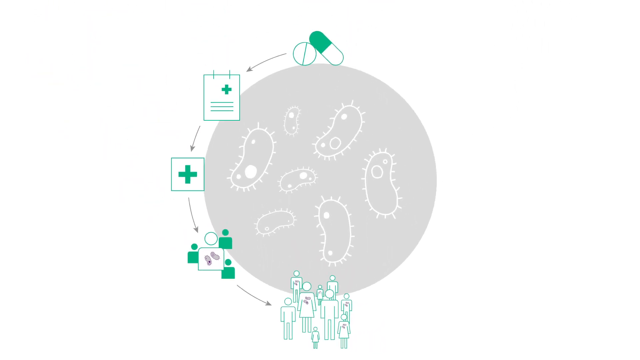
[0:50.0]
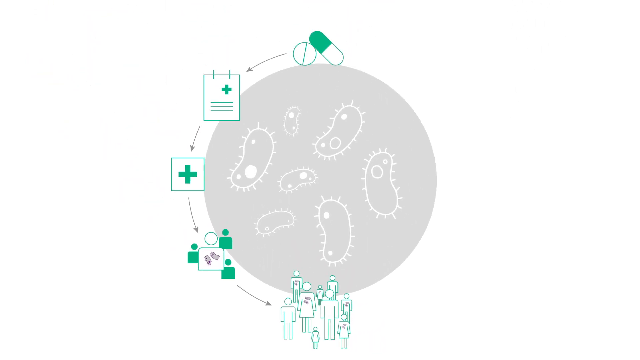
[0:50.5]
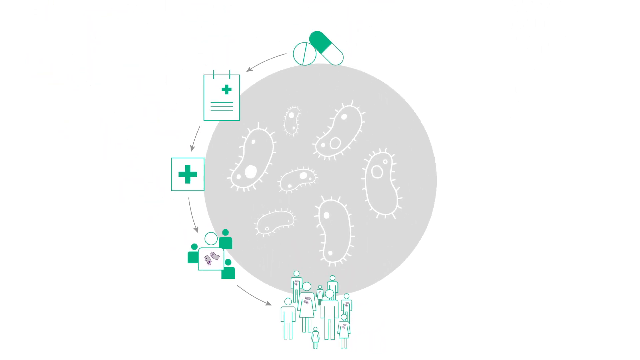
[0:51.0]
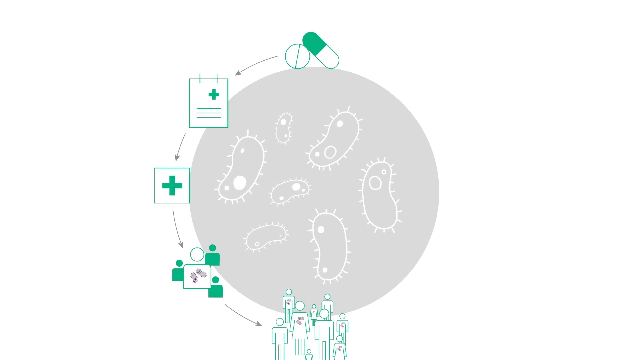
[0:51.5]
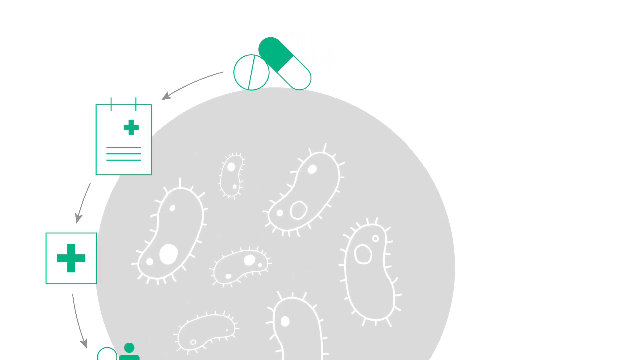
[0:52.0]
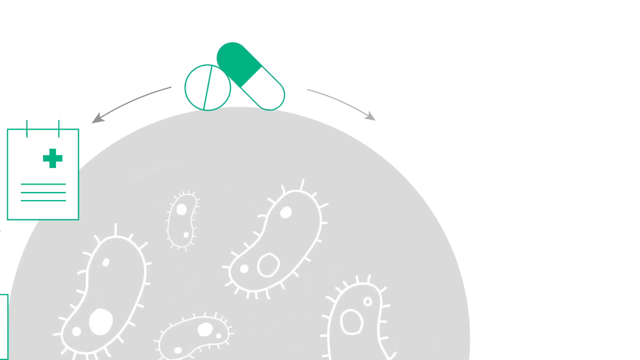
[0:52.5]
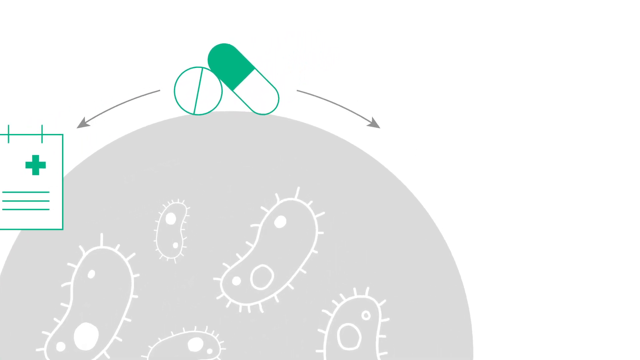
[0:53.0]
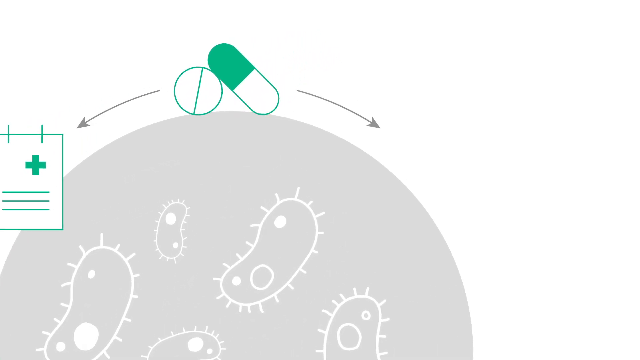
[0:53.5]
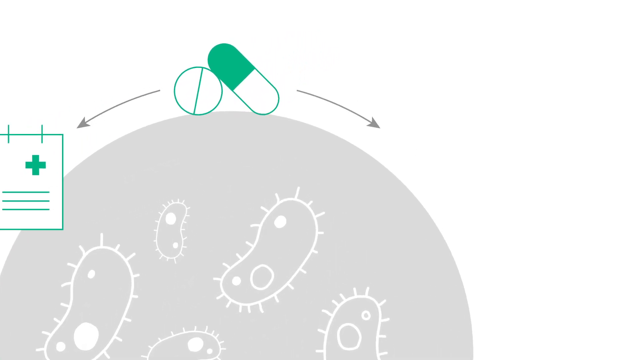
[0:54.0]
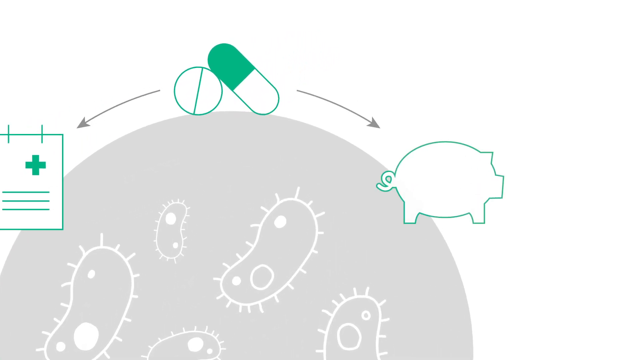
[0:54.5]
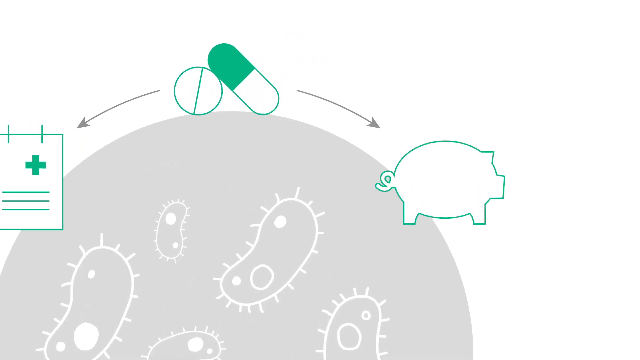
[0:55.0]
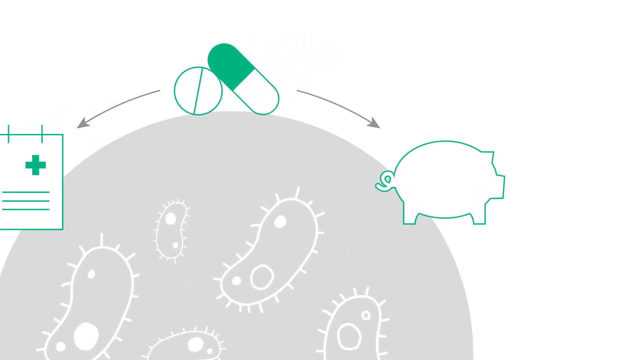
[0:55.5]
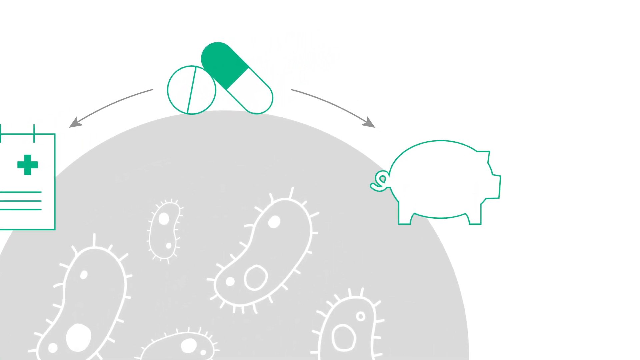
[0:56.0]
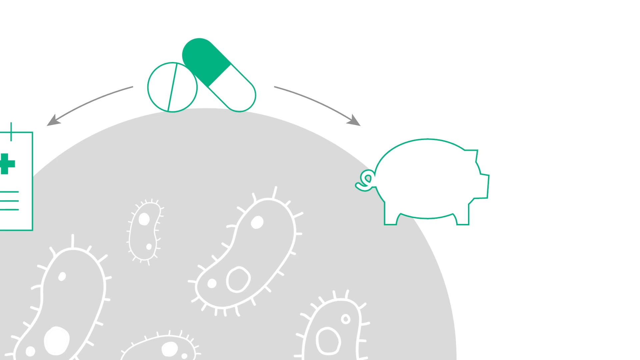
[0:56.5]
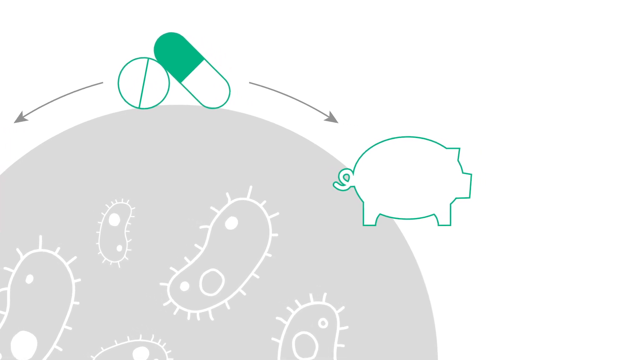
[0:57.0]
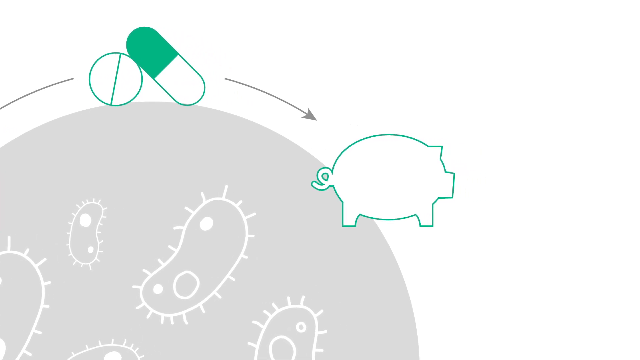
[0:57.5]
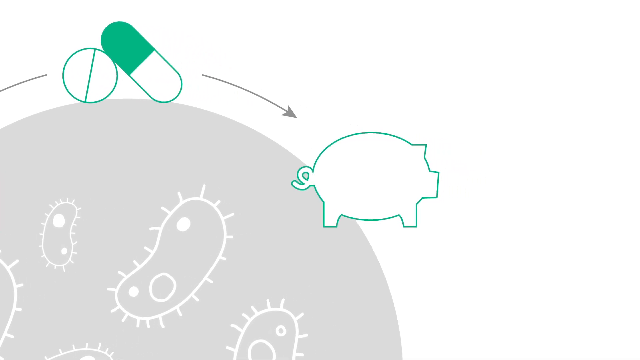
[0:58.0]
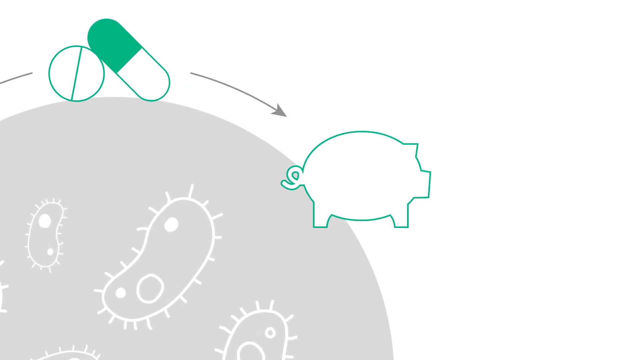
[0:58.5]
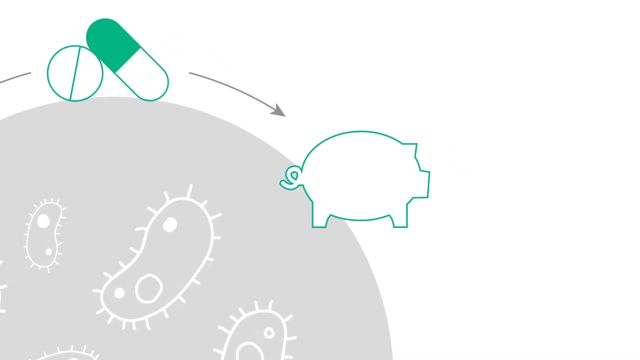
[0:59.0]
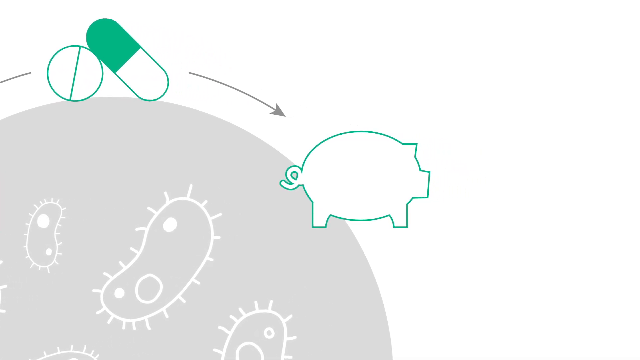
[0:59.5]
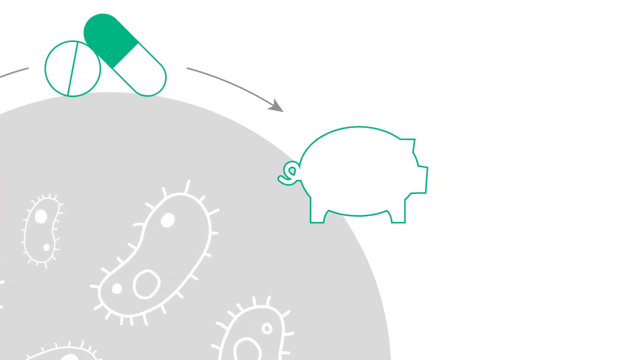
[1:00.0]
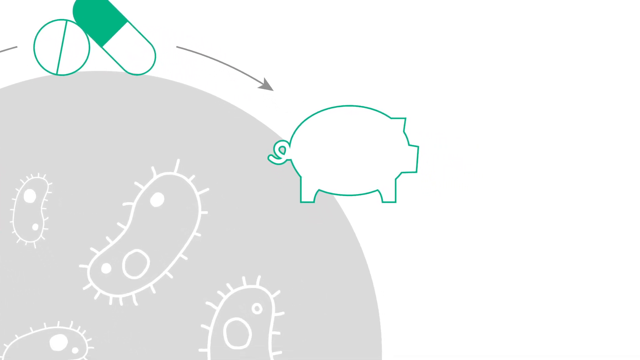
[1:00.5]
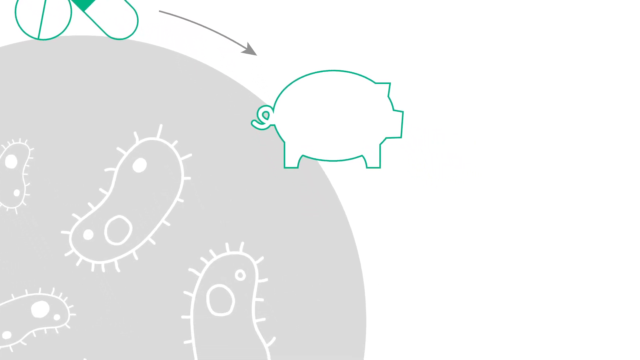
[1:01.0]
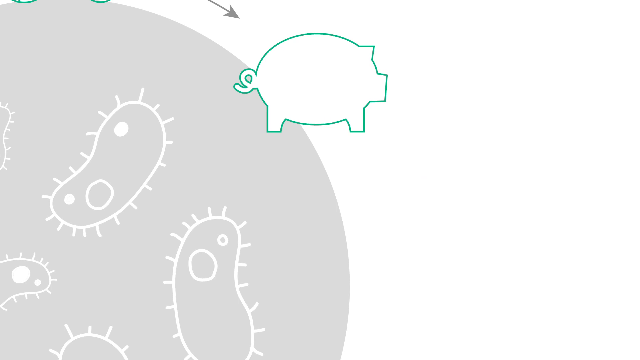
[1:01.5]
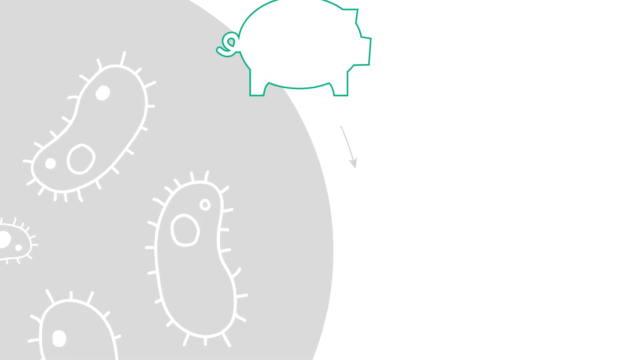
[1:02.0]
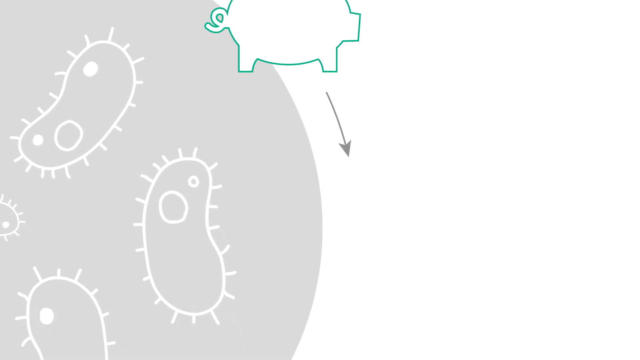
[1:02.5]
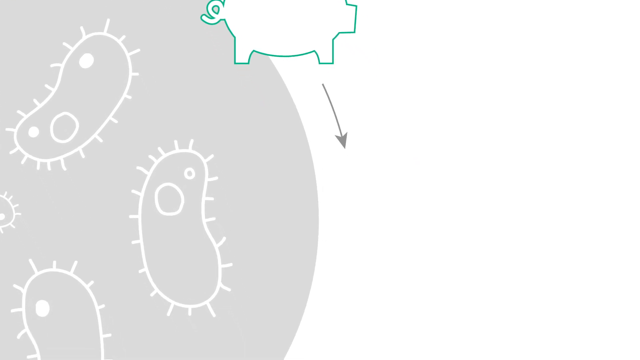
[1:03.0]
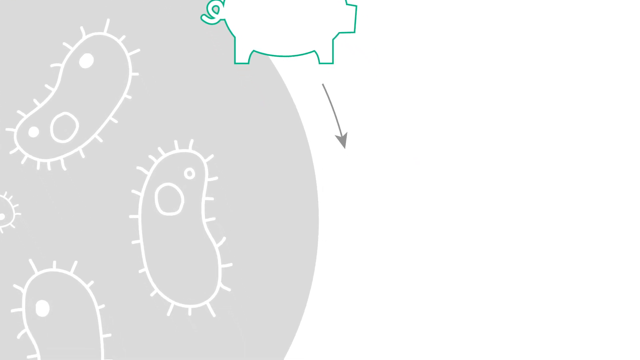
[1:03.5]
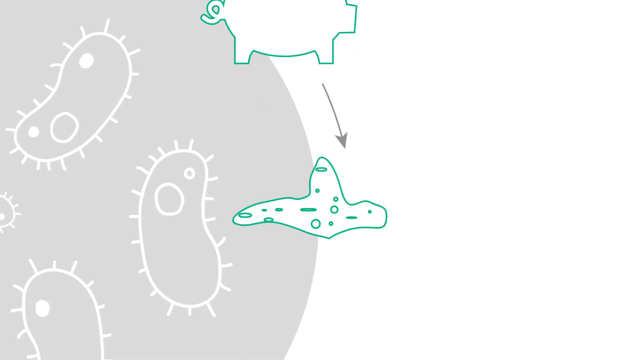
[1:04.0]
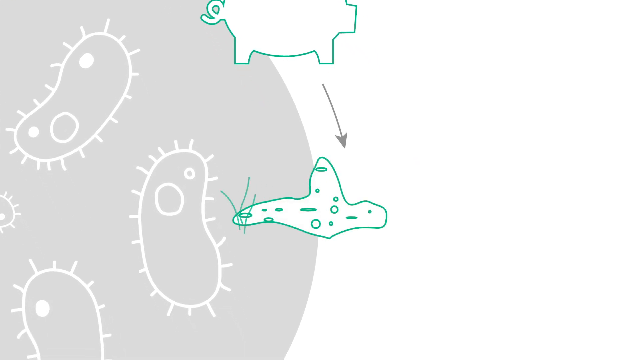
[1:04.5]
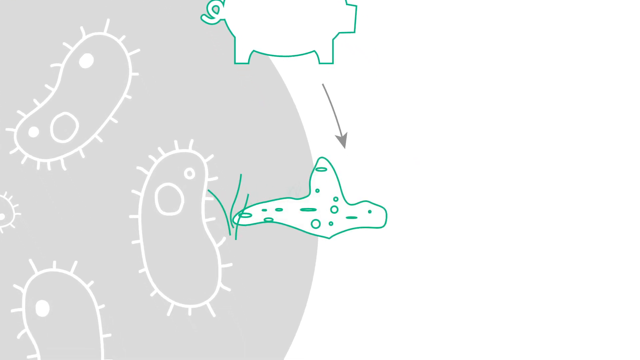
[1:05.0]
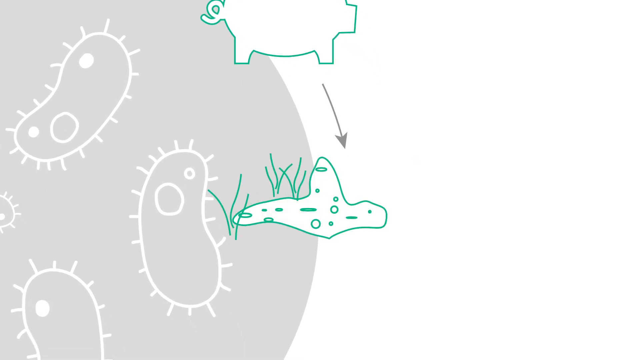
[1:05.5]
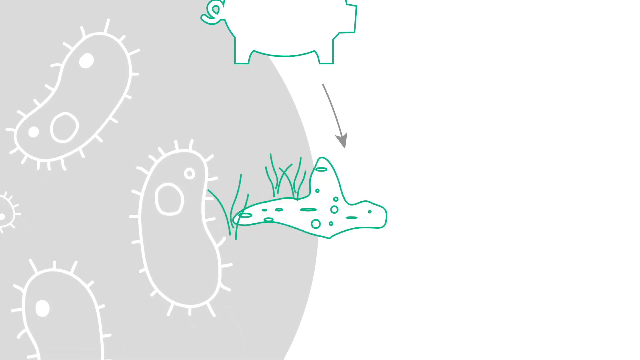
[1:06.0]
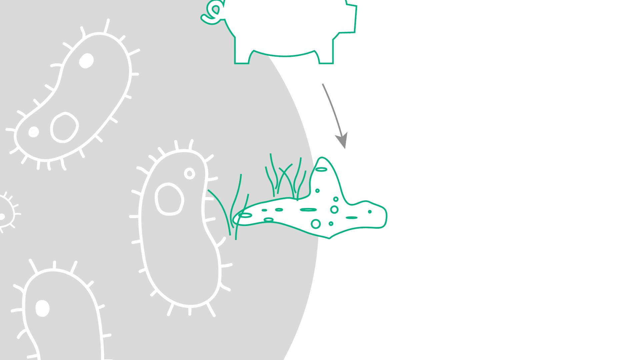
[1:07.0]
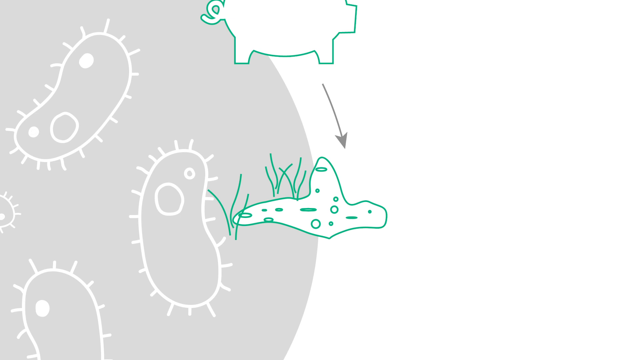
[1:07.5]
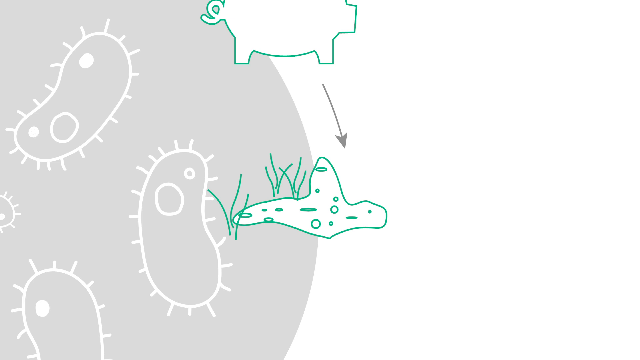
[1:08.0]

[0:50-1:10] Many germs appear, some of them really big, though what they are is unclear; they seem to be germs or something similar. A circle is created, and in the middle of the circle there are many germs. After that, some plus and minus signs appear, then a big plus sign, then many germs, and then a human body with some germs on it.